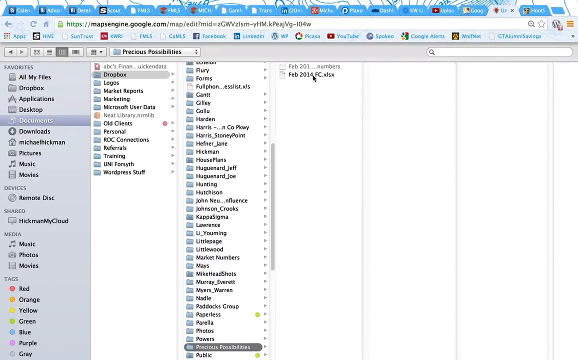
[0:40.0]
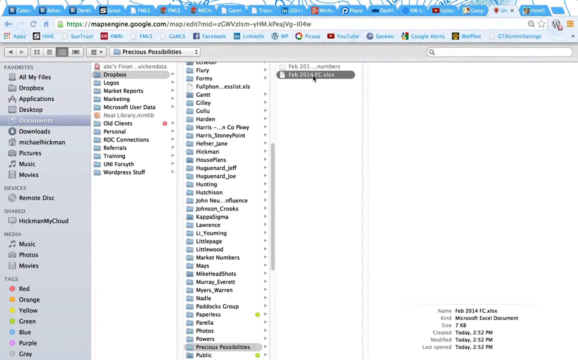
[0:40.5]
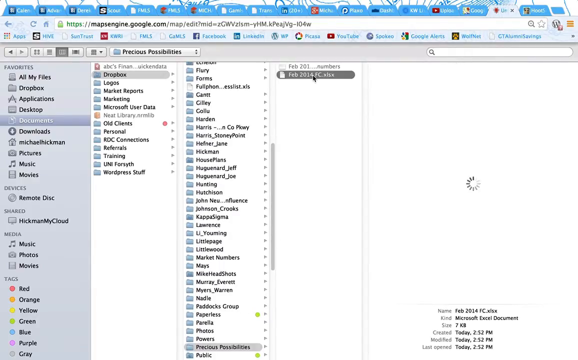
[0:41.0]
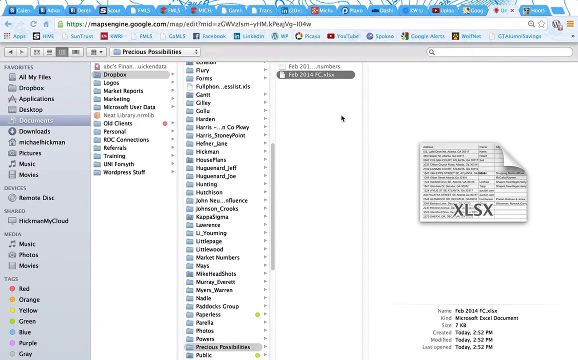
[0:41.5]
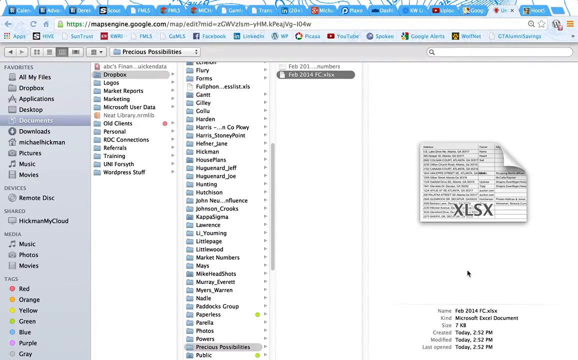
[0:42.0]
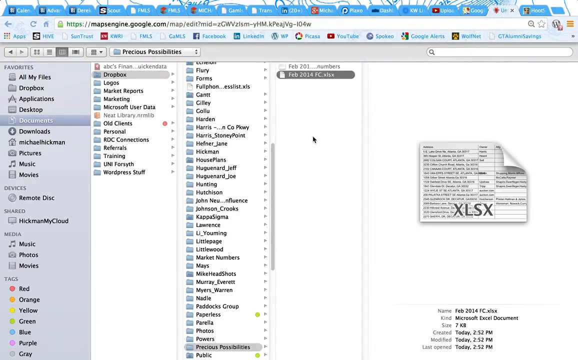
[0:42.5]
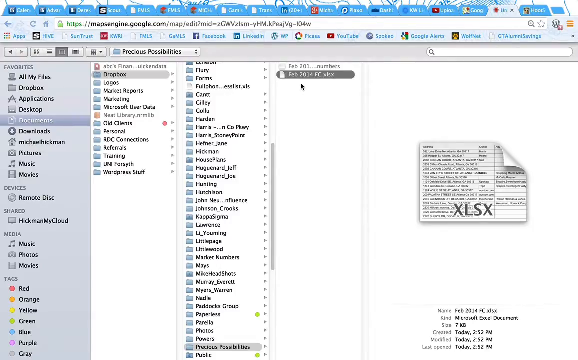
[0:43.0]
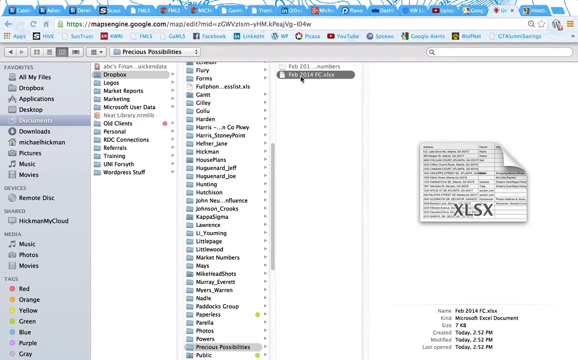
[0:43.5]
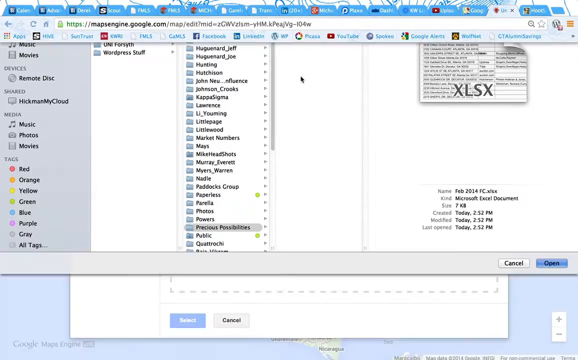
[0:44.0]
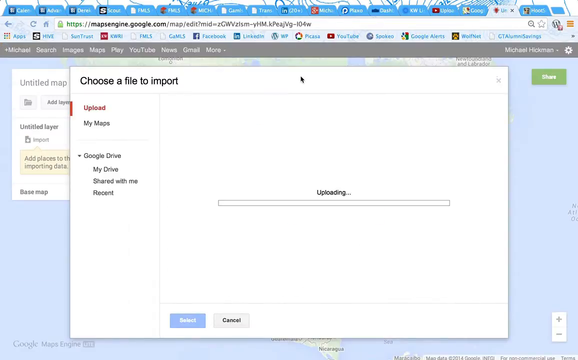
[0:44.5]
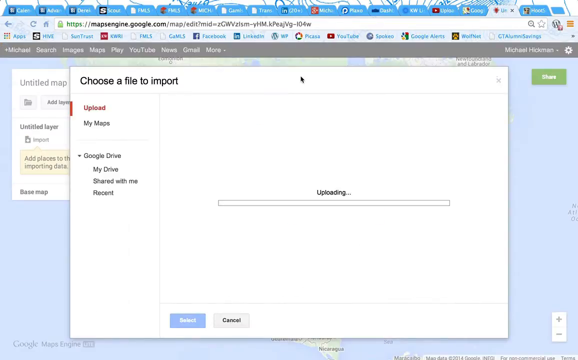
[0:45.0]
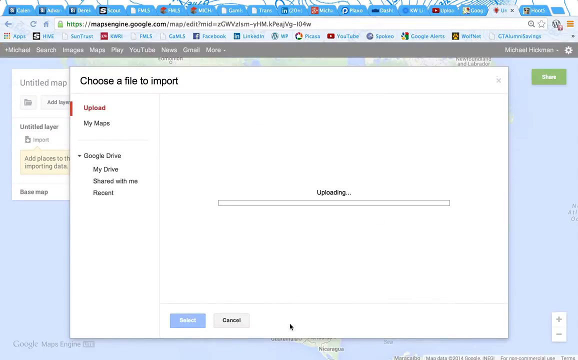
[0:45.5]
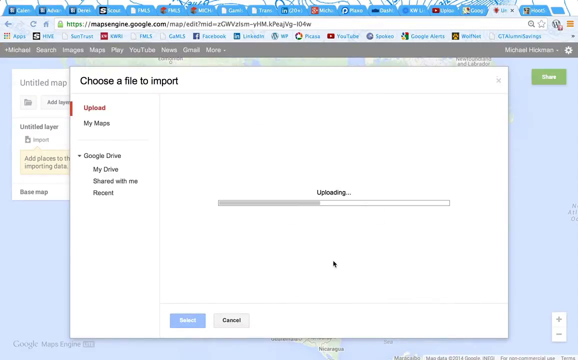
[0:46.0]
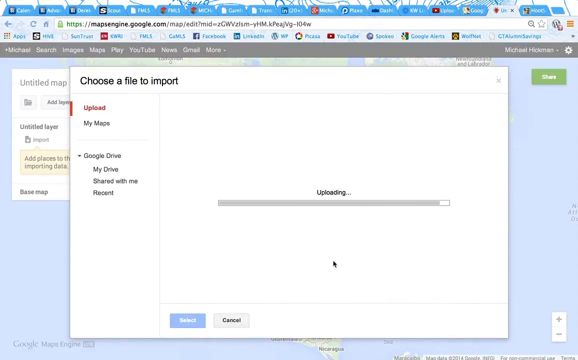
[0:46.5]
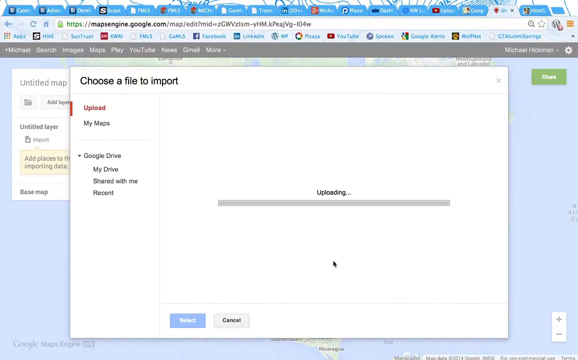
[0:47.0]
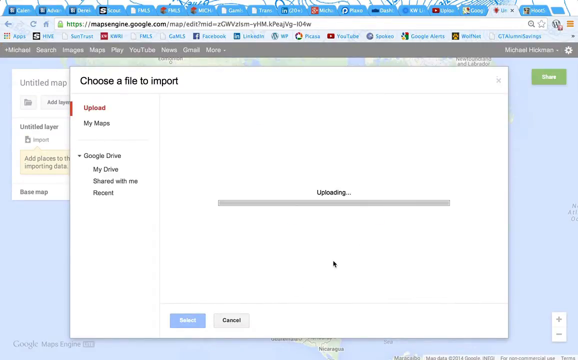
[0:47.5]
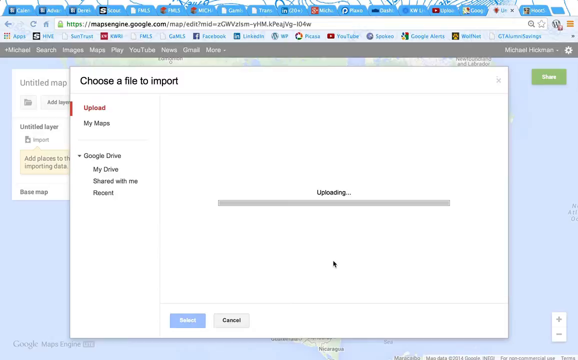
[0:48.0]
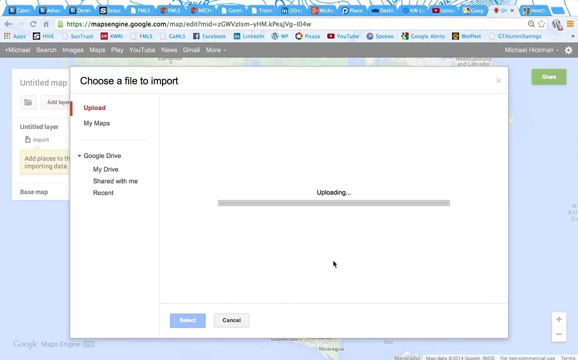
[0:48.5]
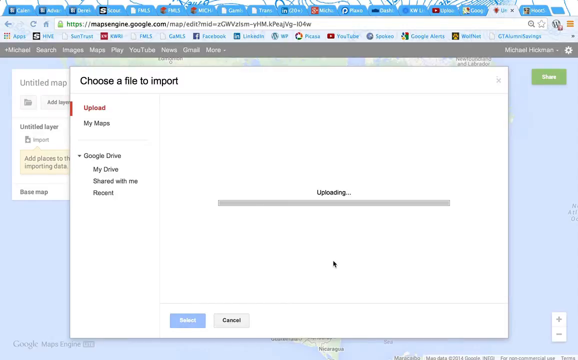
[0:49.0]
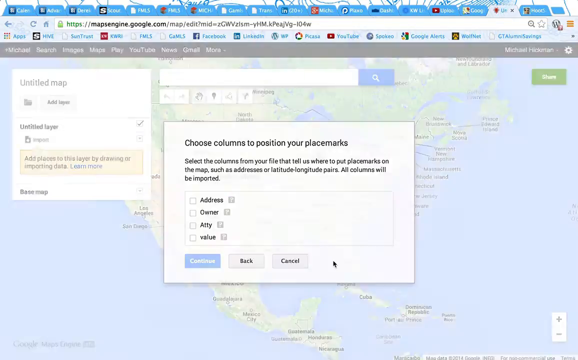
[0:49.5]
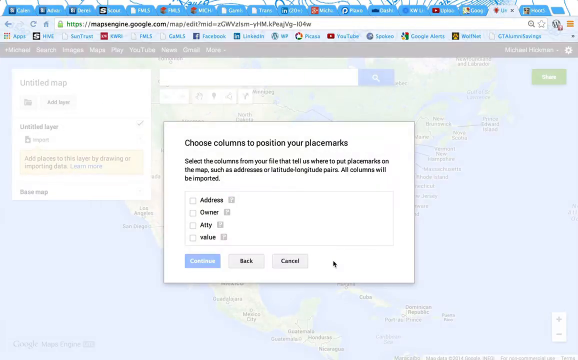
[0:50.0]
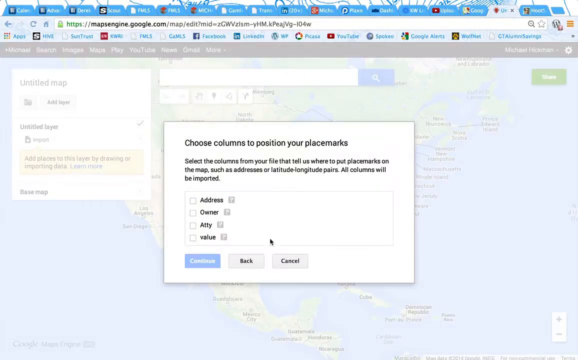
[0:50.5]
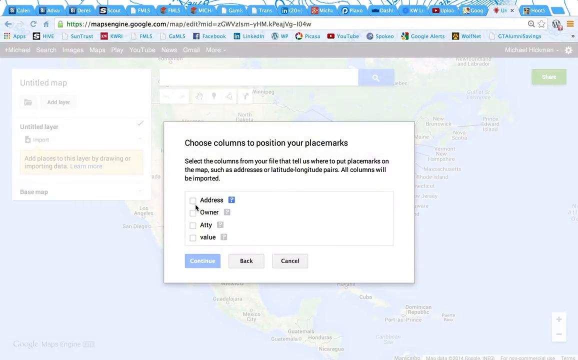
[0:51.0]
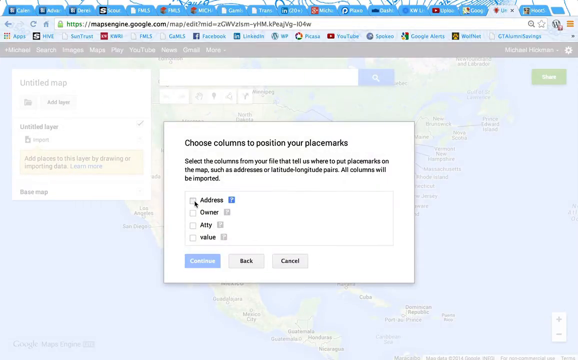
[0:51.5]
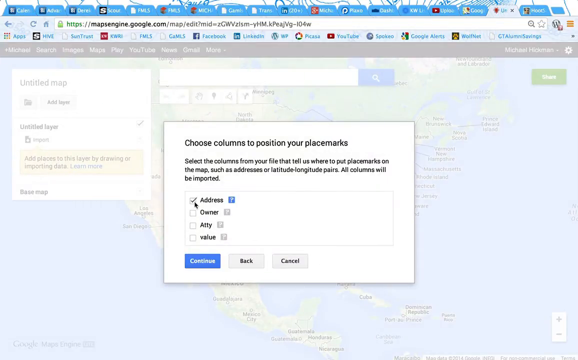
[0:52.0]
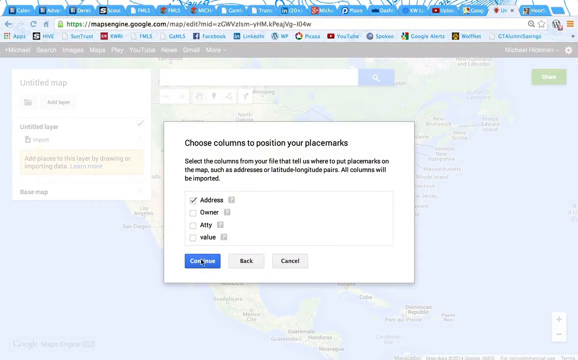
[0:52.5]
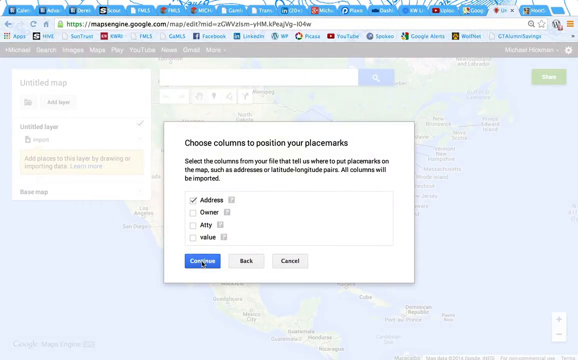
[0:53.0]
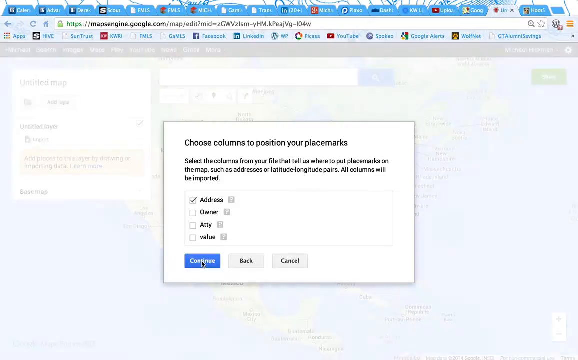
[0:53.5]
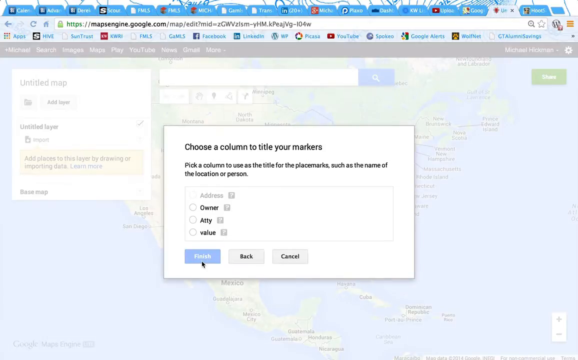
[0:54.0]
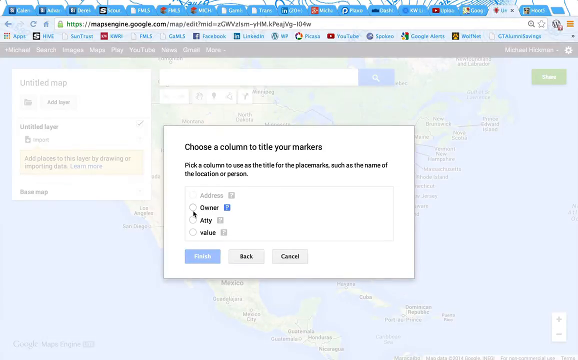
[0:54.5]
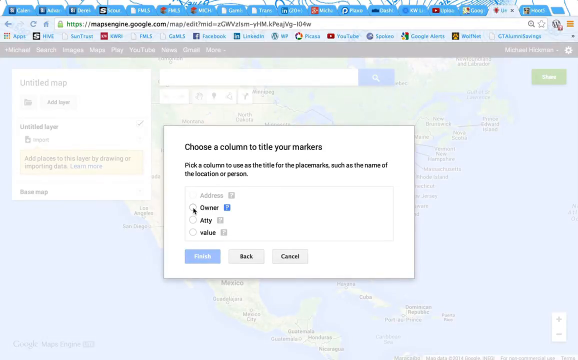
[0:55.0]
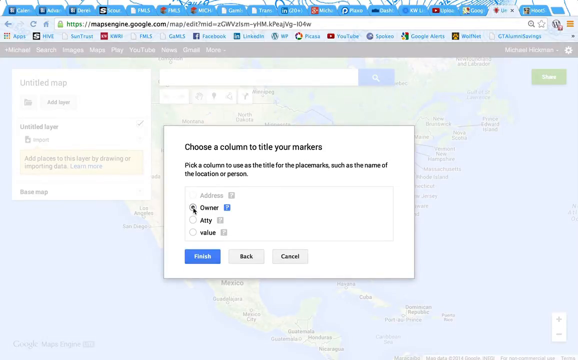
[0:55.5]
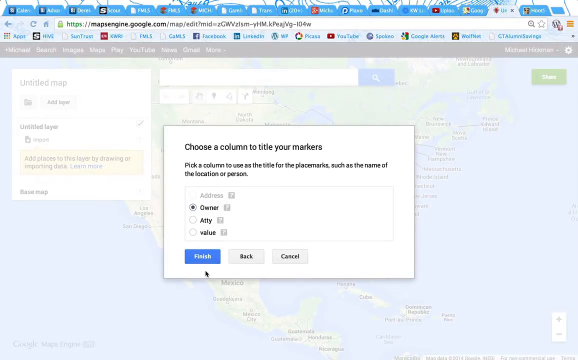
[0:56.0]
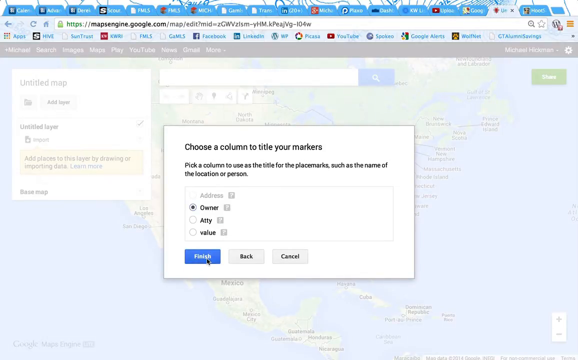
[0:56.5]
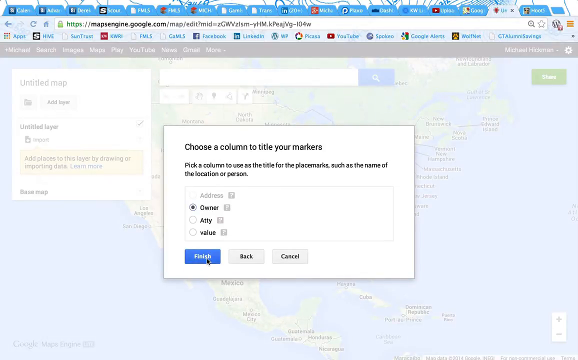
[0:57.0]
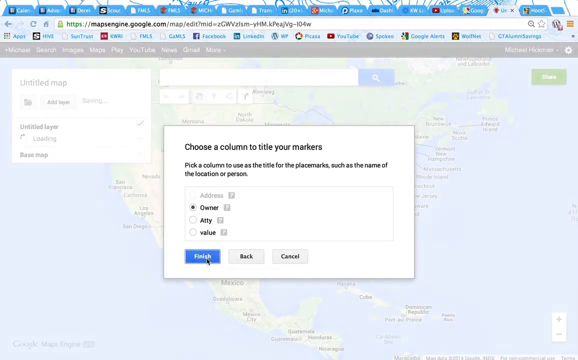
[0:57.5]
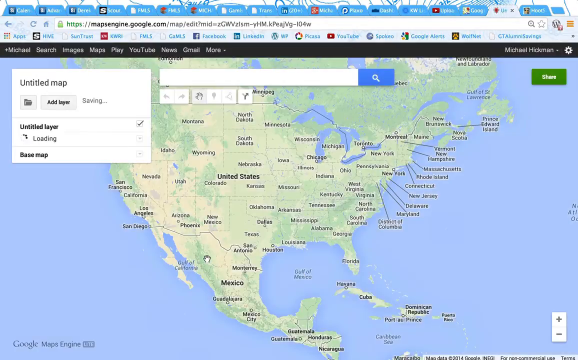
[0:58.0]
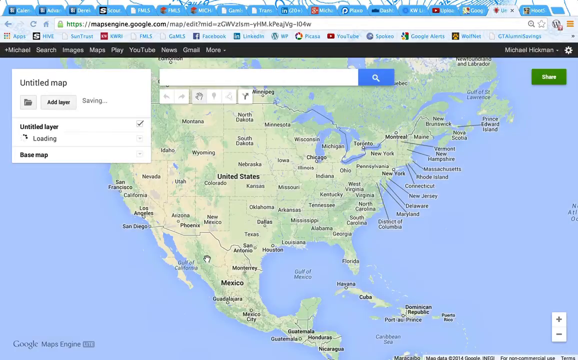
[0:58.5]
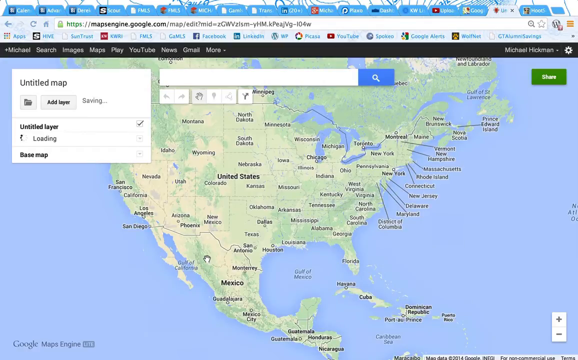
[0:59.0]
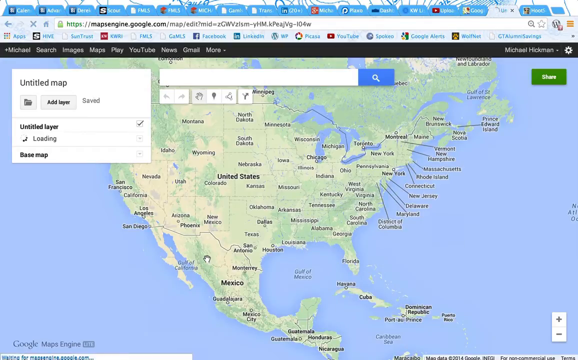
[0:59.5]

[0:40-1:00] The screen shows several options to select on the left and more options arranged in columns in the main part of the screen. The address line shows a mapsengine.google.com website. The user's mouse scrolls upwards to select an option, and a window opens that says "choose a file to import," with the upload button highlighted in red. The file begins to load, and a green status bar travels from left to right, filling the bar with grey as the upload completes. Another window appears that says "choose columns to position your placements." The mouse selects address and then continue, then selects owner and clicks finish. A small window on the left shows the process in progress as "untitled layer" loads.